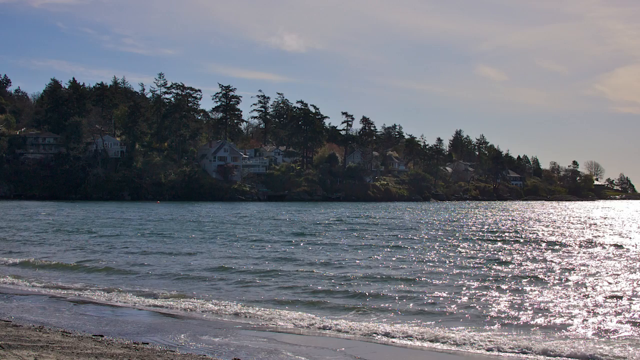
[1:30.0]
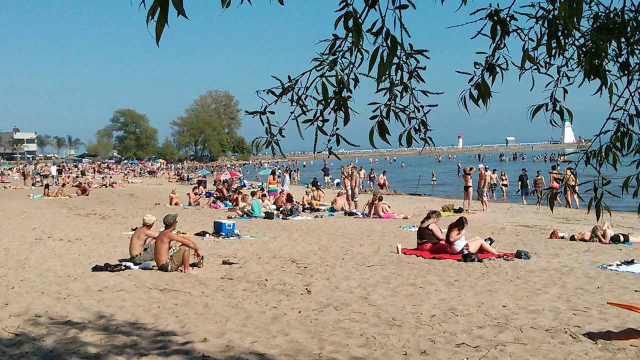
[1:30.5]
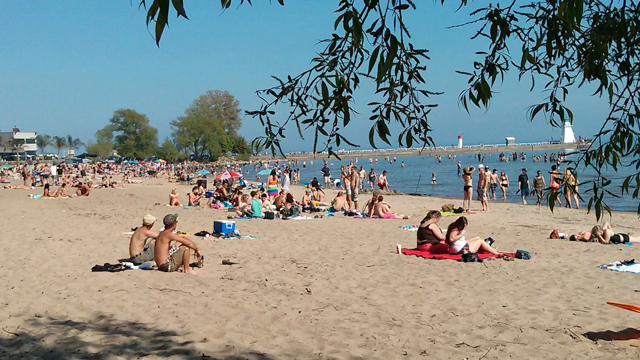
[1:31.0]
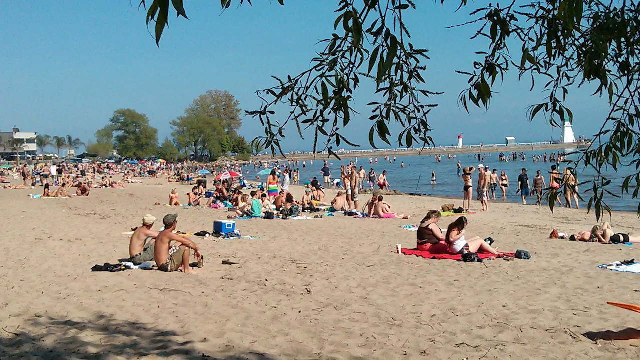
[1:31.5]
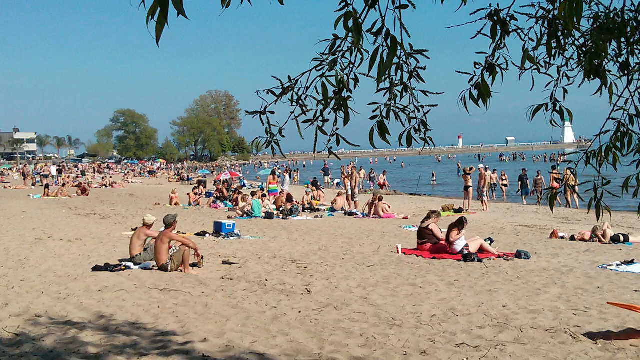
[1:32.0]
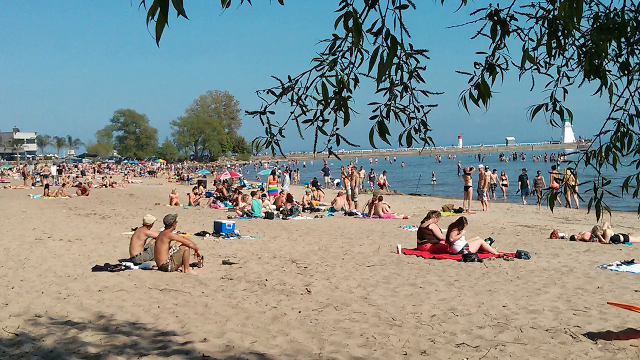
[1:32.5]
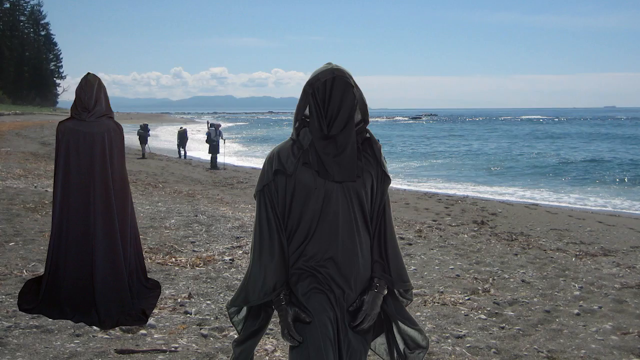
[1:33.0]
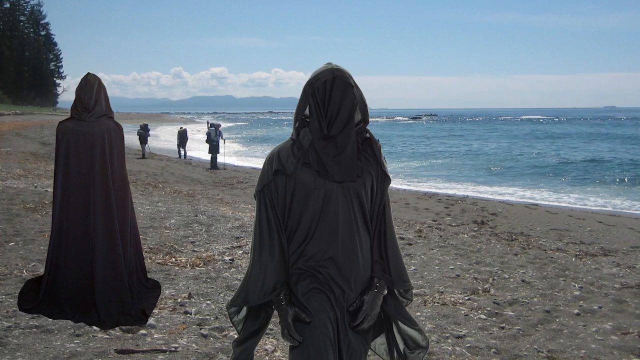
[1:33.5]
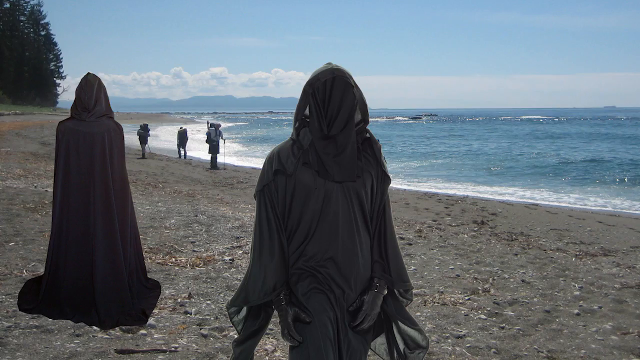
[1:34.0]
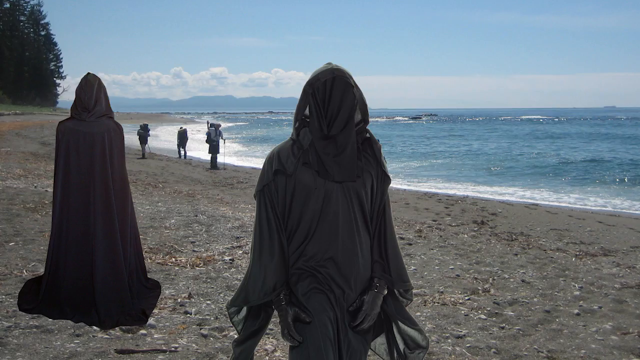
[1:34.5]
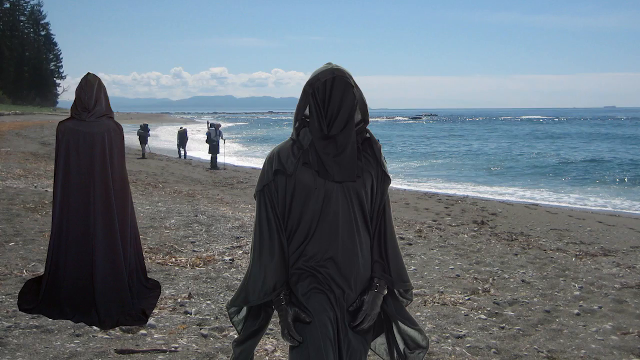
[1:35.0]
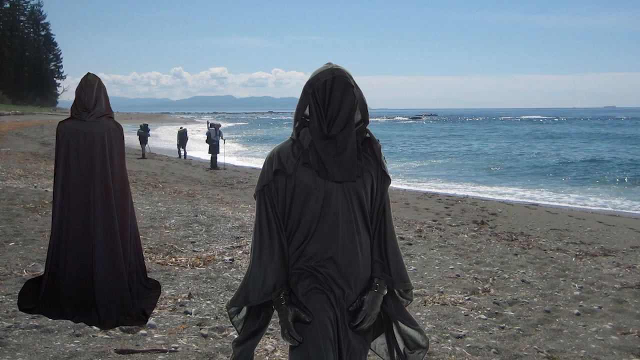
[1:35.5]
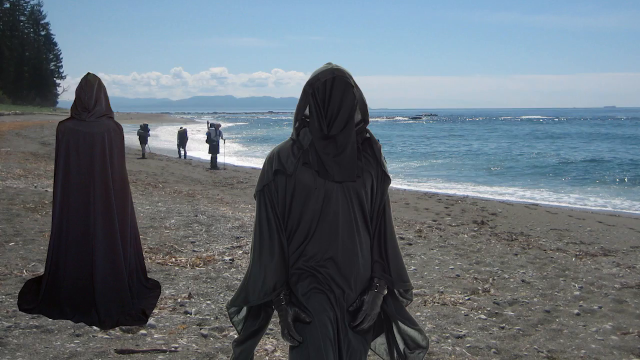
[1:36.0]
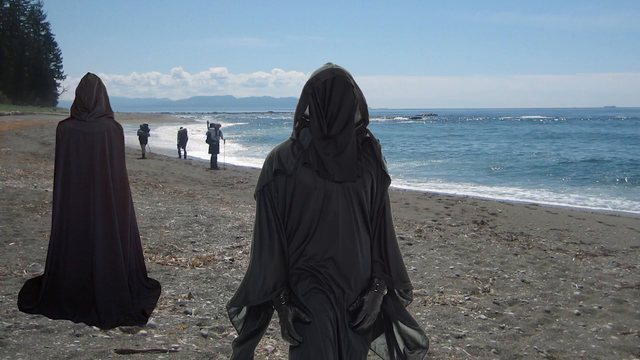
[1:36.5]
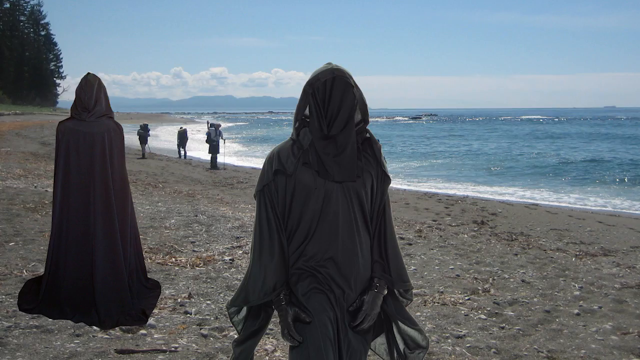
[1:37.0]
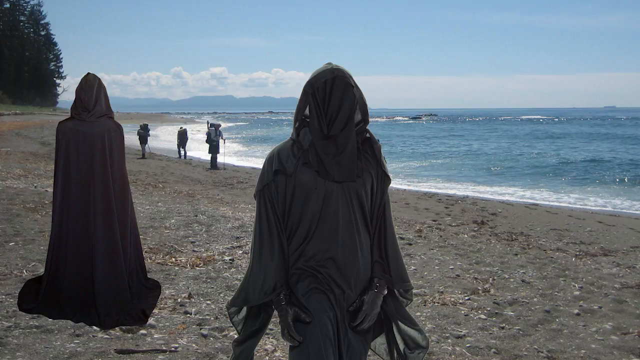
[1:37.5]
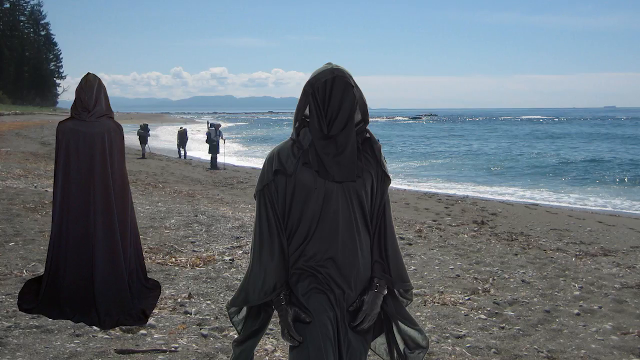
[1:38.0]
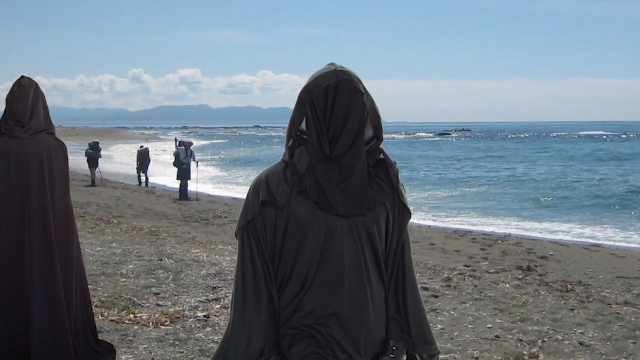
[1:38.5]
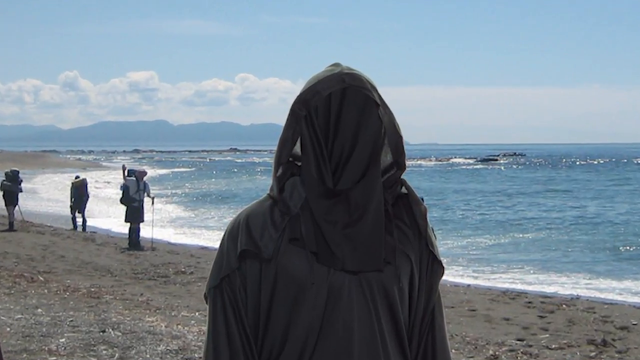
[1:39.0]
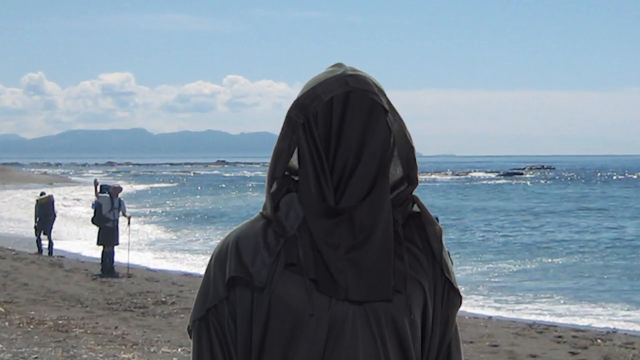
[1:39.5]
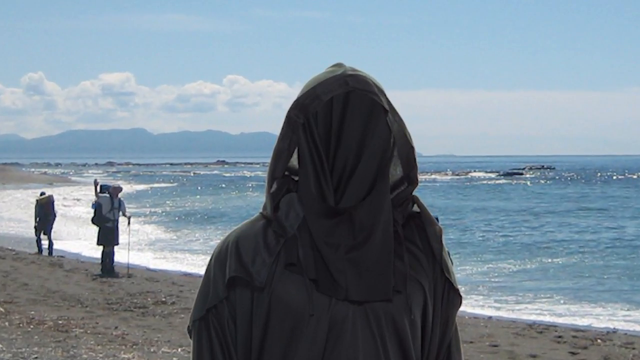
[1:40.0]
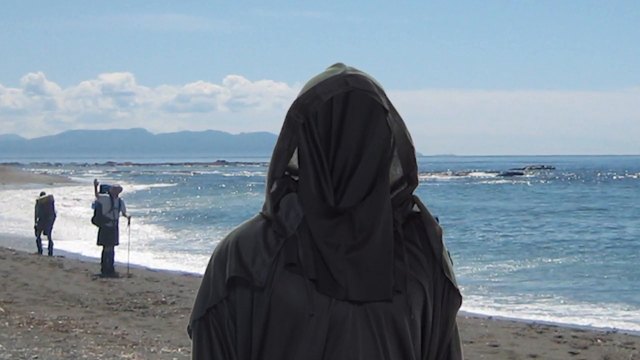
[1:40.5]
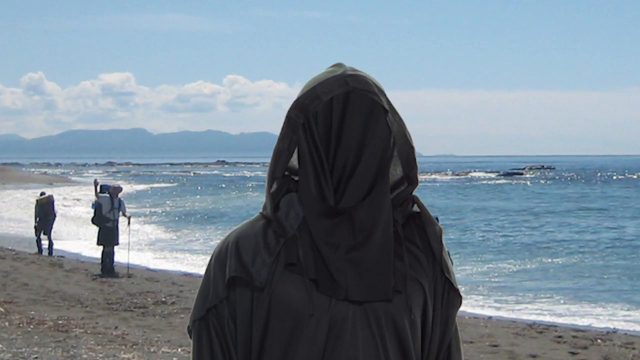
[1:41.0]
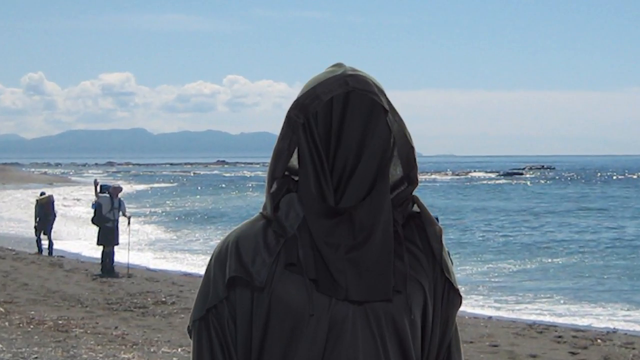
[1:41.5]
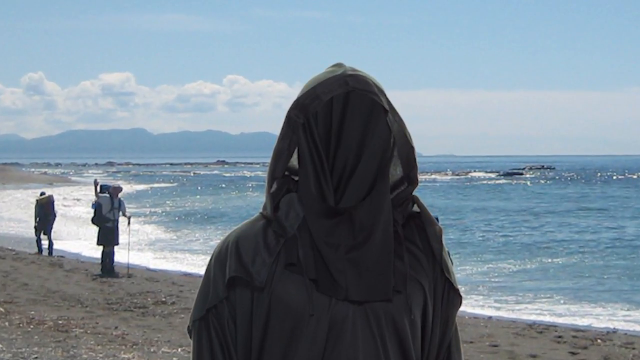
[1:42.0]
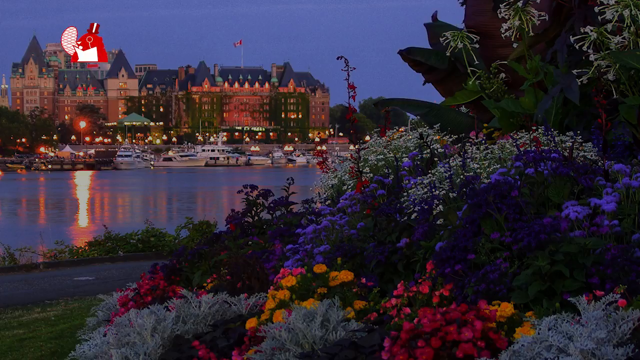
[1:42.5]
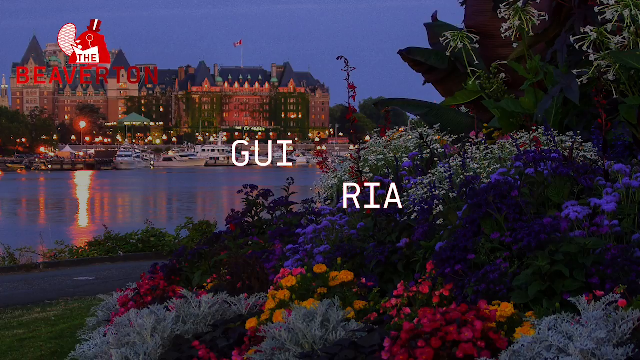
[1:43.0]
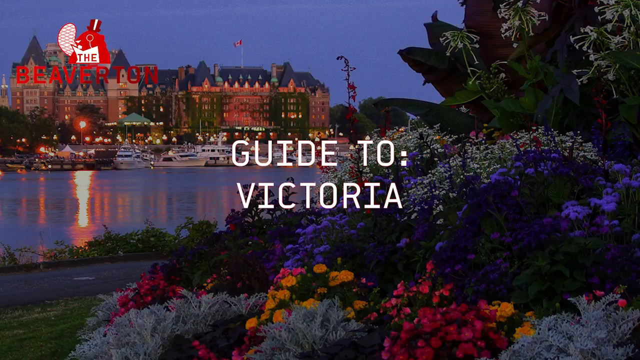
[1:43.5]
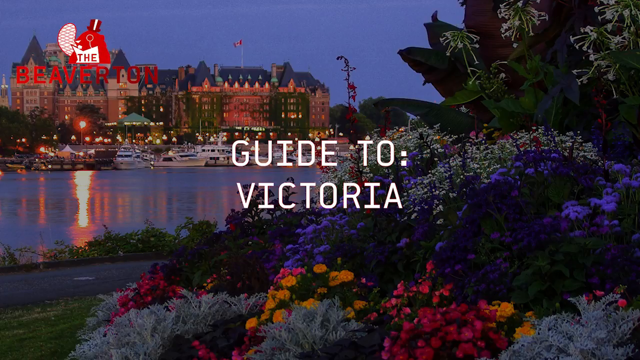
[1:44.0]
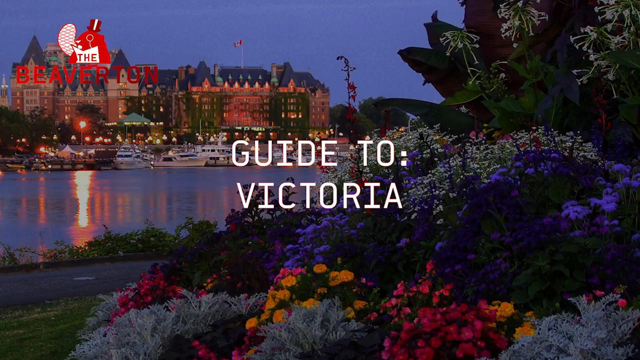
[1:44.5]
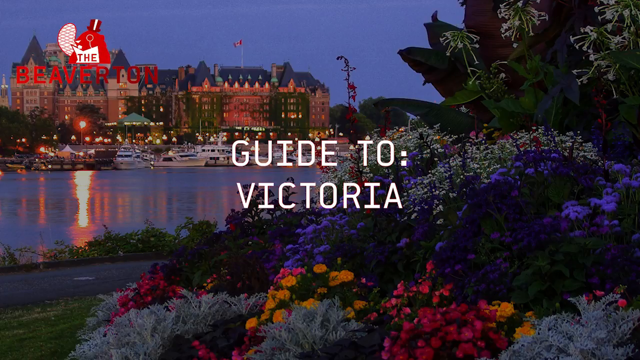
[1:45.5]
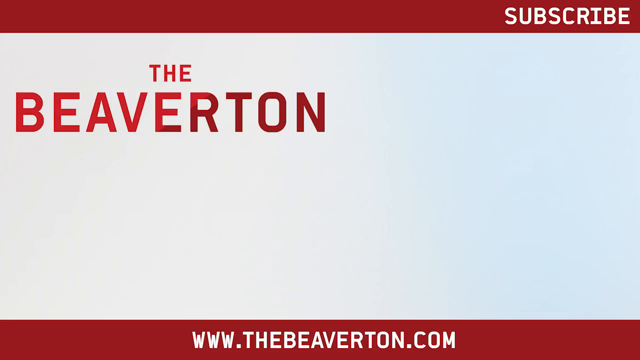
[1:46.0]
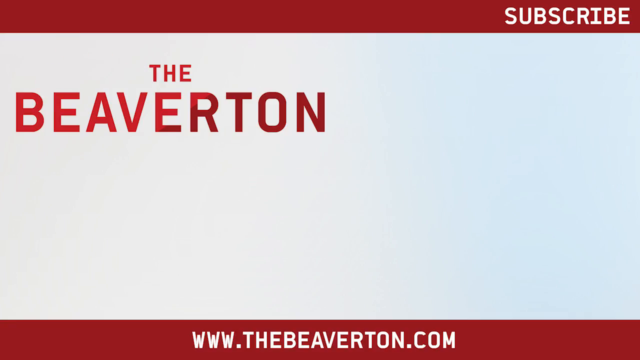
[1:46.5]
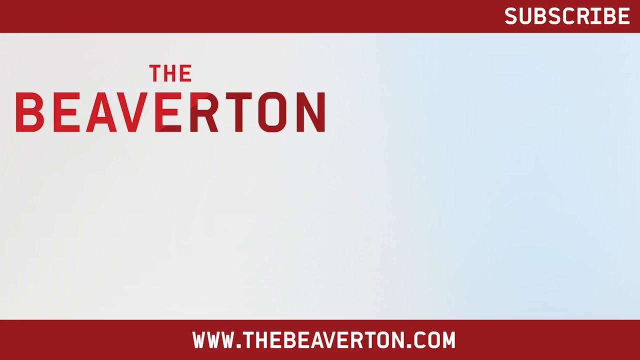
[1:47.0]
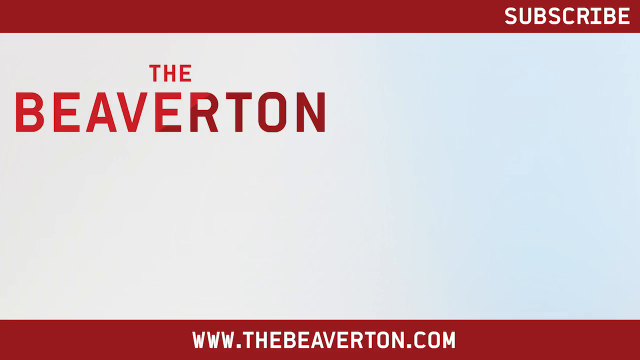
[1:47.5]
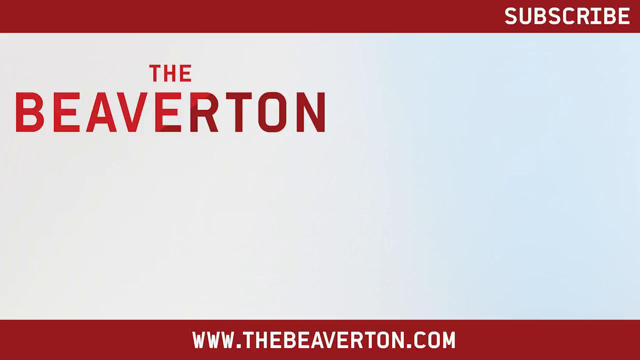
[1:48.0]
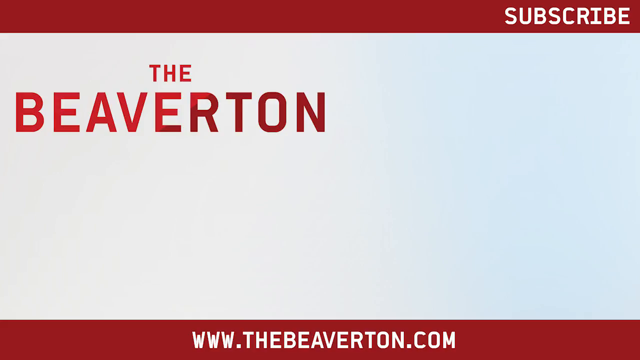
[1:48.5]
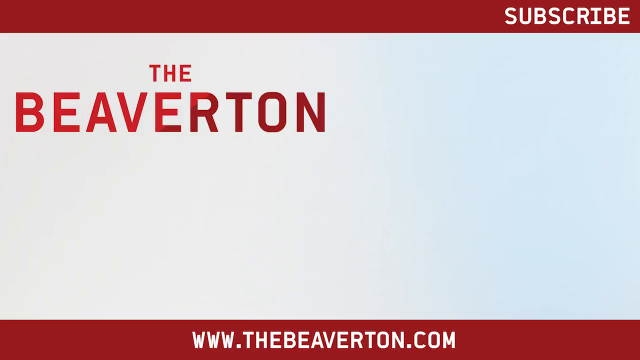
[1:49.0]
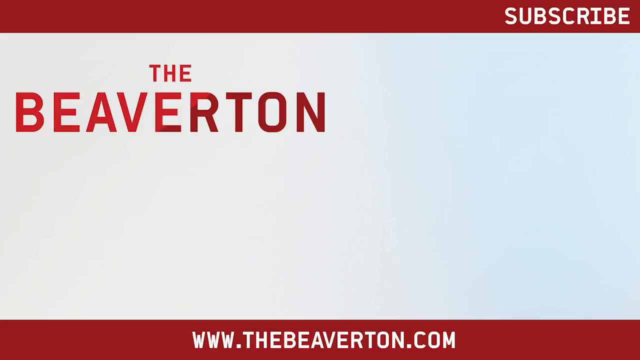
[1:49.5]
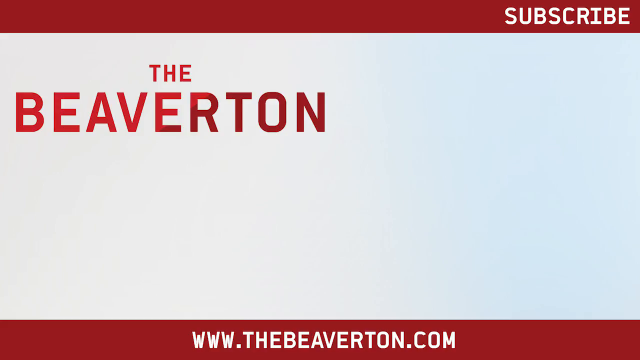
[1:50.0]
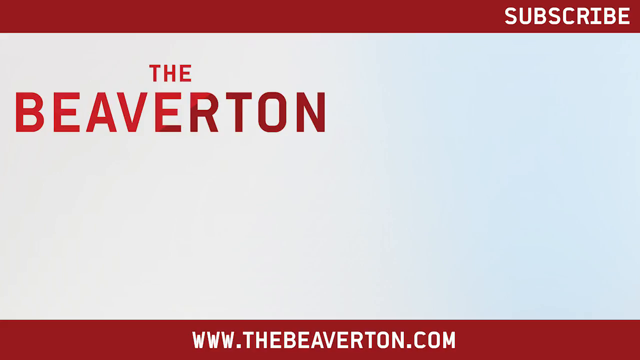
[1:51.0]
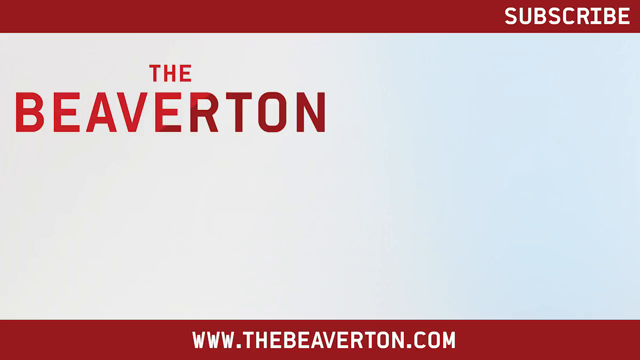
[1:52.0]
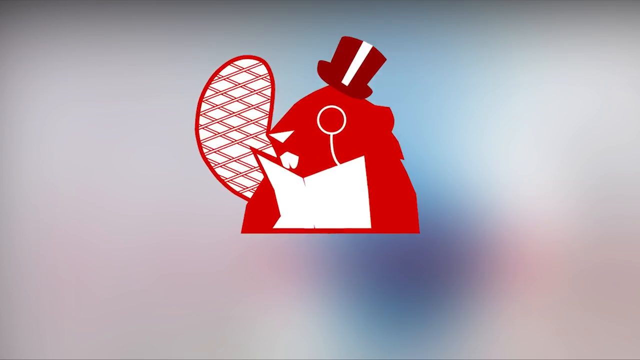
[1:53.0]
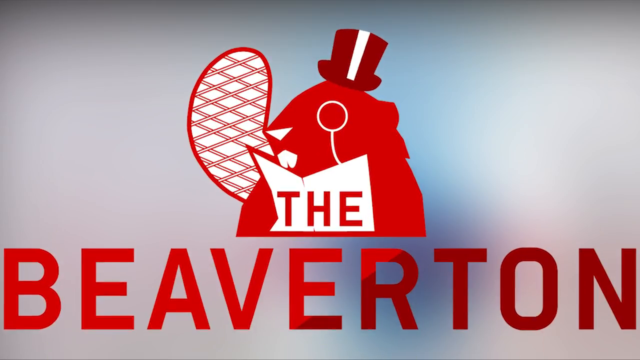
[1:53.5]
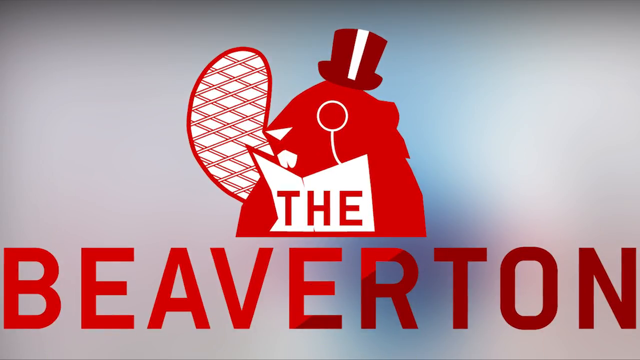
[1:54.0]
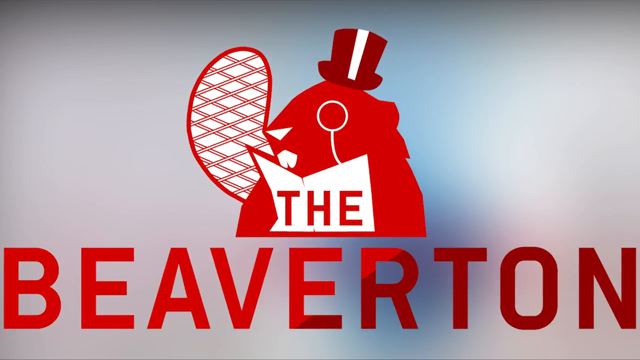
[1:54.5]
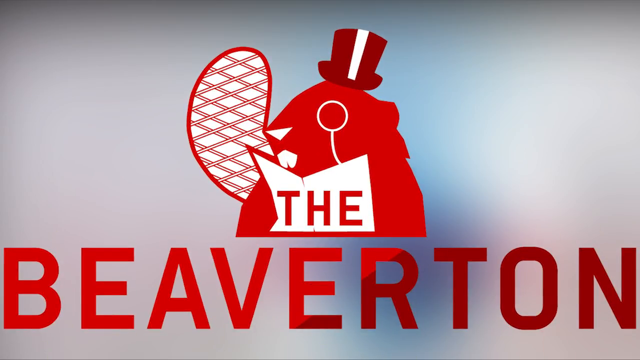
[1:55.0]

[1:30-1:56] A body of water appears, with what looks like a hill covered in trees and houses in the background, and the sun shining on the water on the right side of the screen. The video cuts to a picture of a beach where a bunch of people are sitting down and some are standing. Next, two people wear robes that look like sheets, with hoods covering their faces, walking on the beach; in the background, more people are also walking on the beach, and they have backpacks on. The view seems to zoom in on one of the people with their face covered, with the water in the background. Then it cuts to what looks like a cityscape with the harbor on the left side of the screen and, on the right side, kind of a garden with a bunch of flowers including purple, orange and pink ones. White text says "guide to Victoria," and in the top left corner is a logo with a red beaver and text that says "the Beaverton."